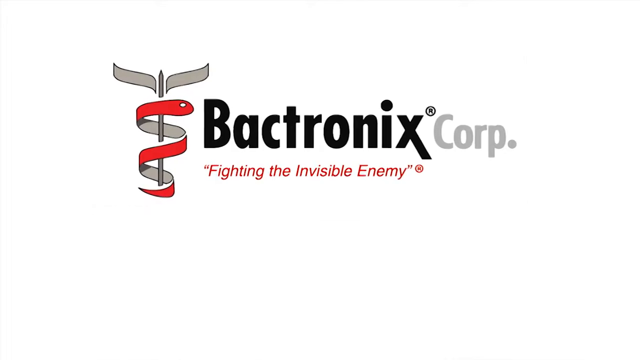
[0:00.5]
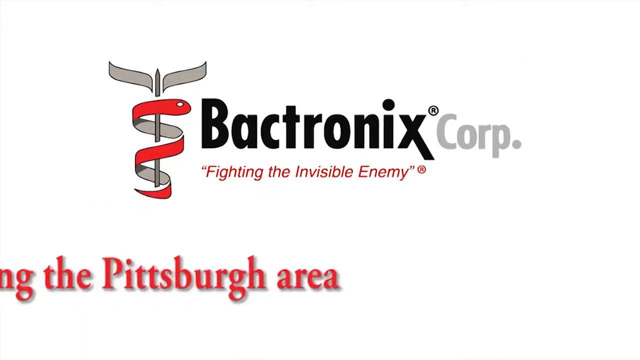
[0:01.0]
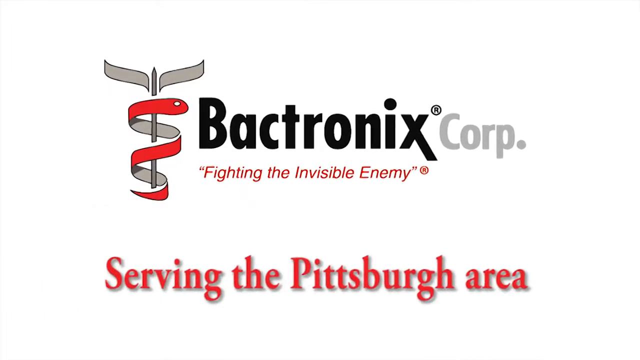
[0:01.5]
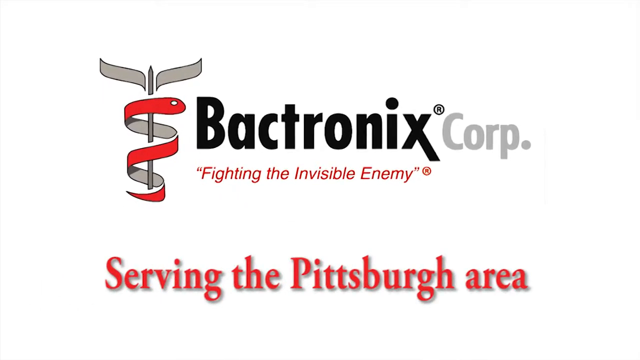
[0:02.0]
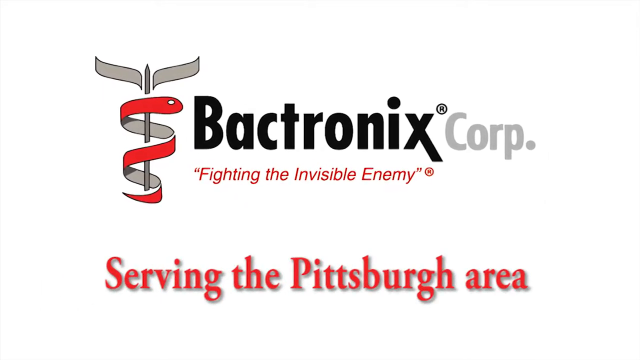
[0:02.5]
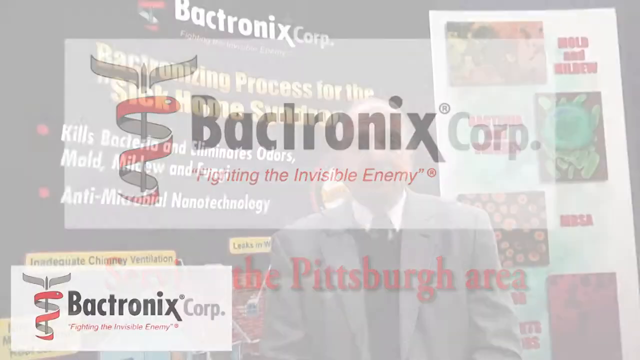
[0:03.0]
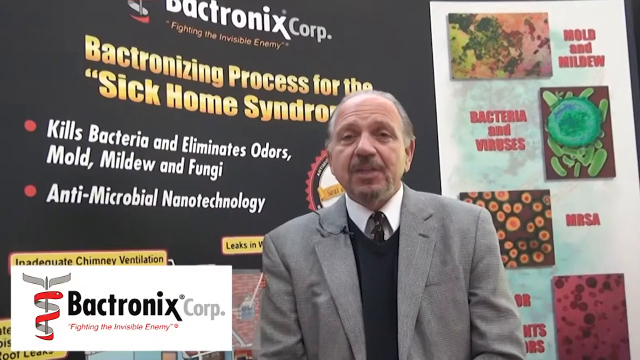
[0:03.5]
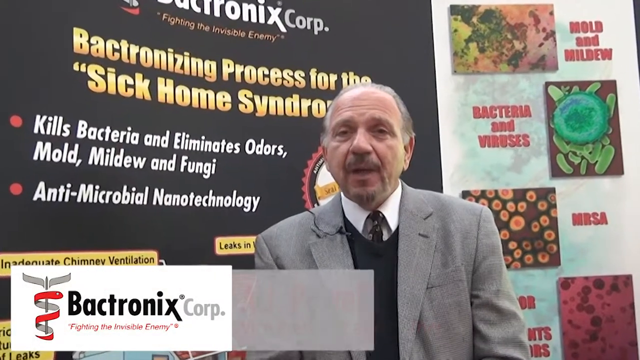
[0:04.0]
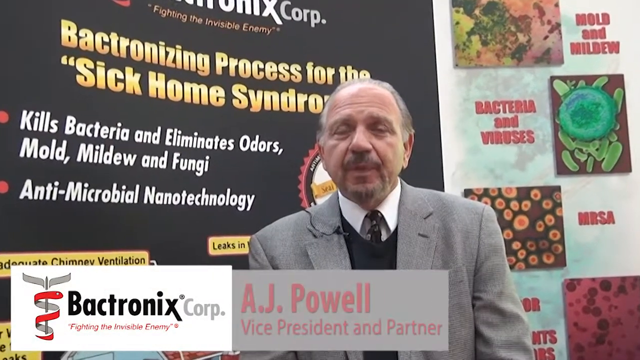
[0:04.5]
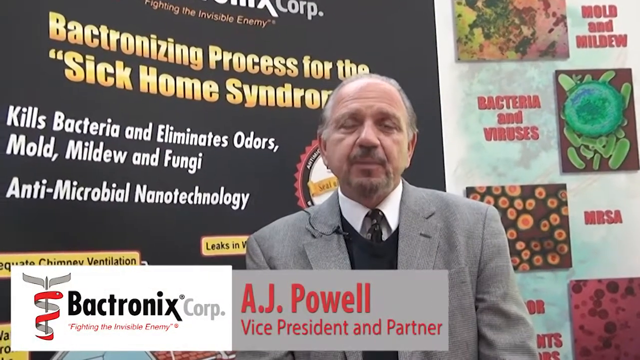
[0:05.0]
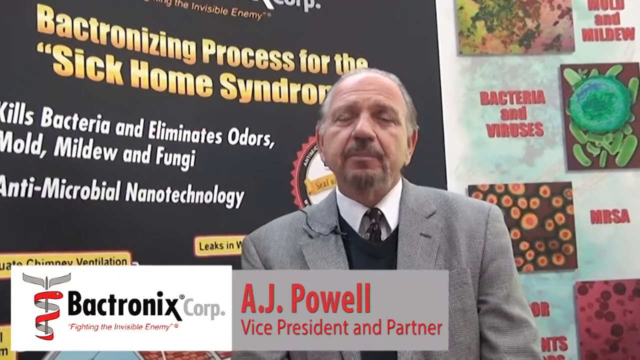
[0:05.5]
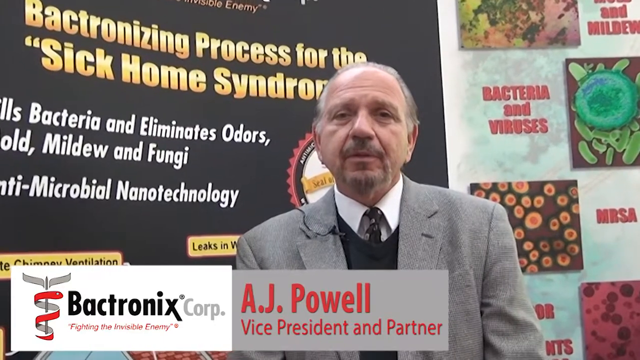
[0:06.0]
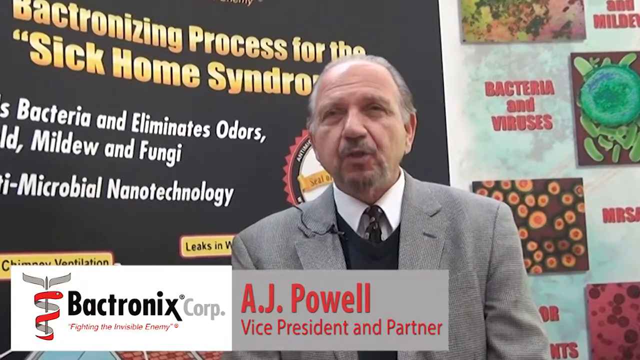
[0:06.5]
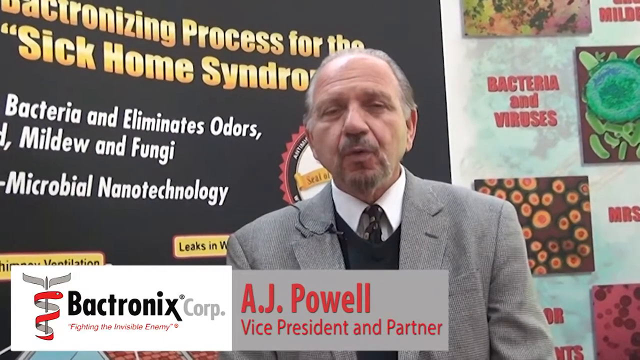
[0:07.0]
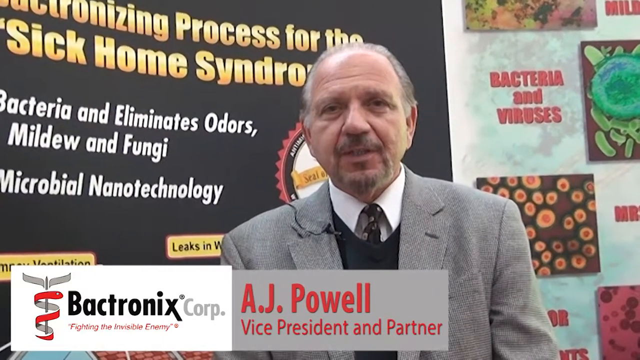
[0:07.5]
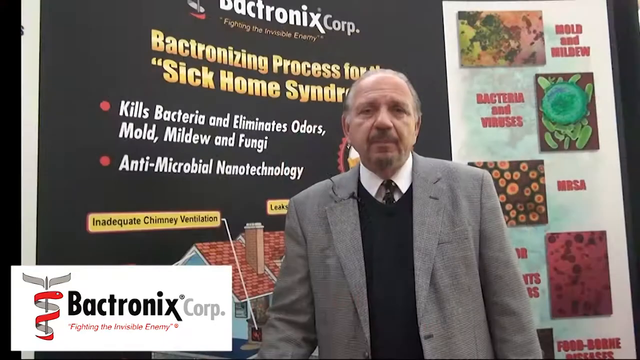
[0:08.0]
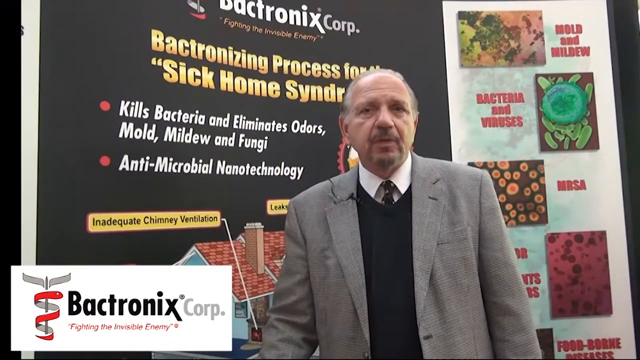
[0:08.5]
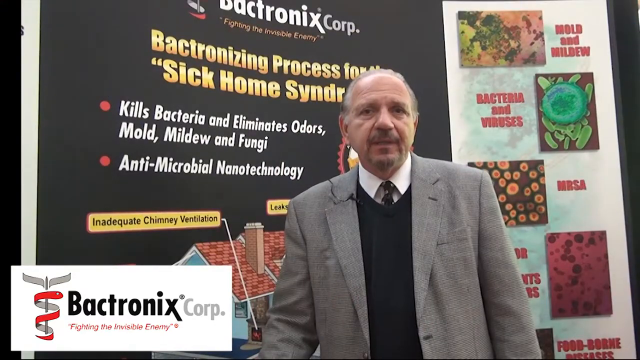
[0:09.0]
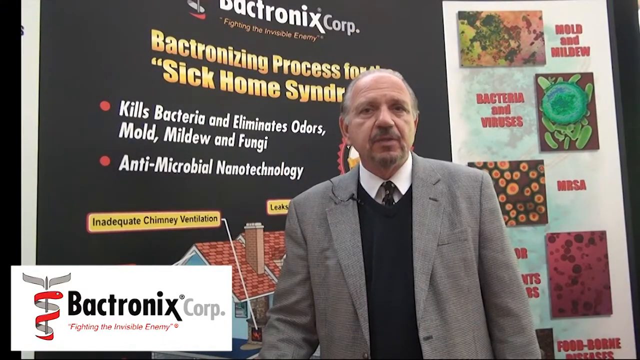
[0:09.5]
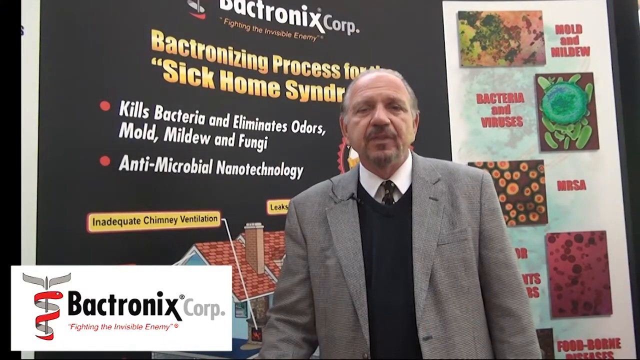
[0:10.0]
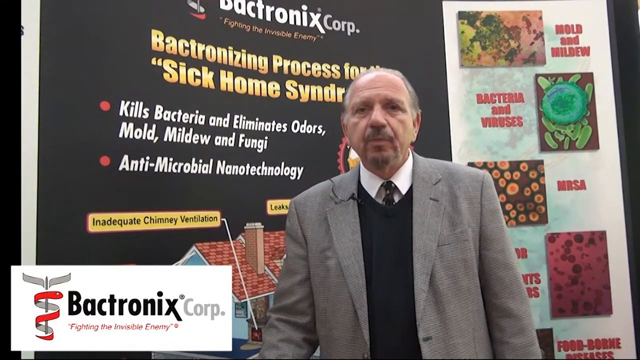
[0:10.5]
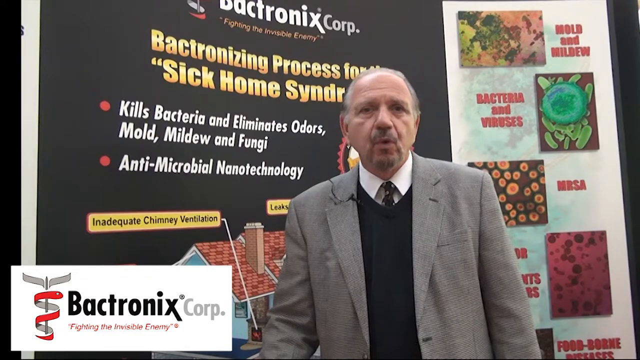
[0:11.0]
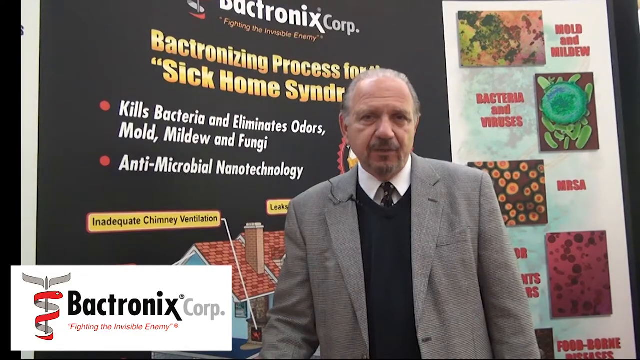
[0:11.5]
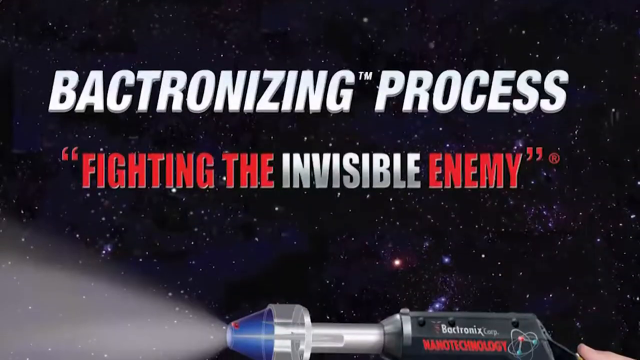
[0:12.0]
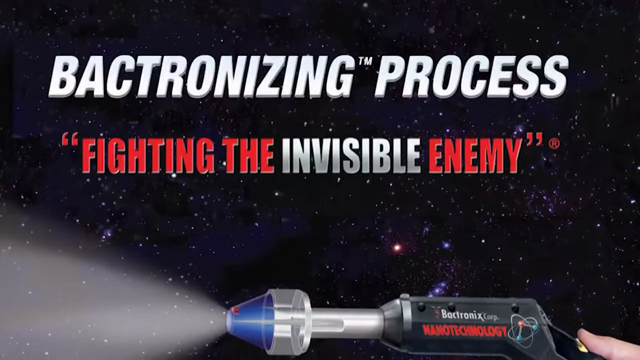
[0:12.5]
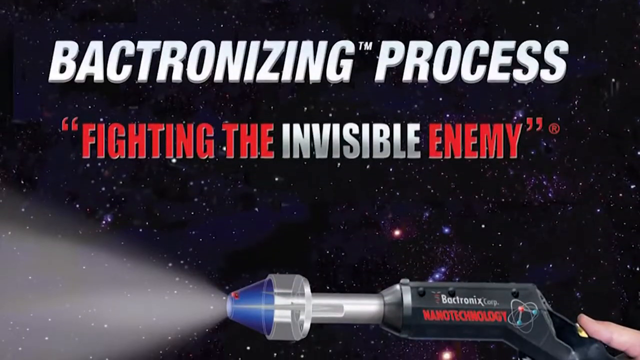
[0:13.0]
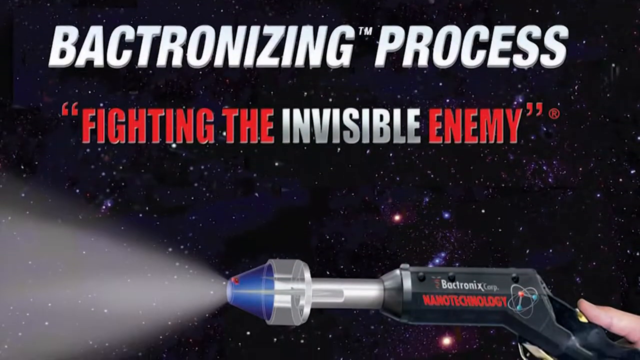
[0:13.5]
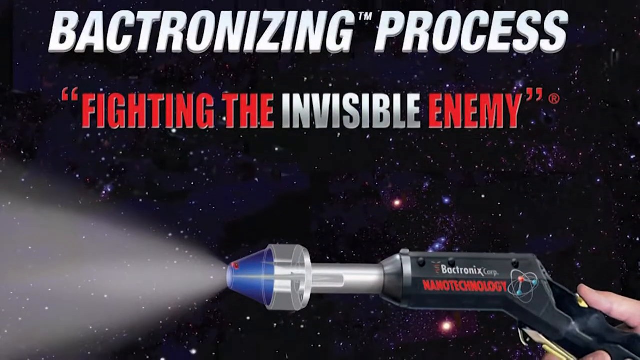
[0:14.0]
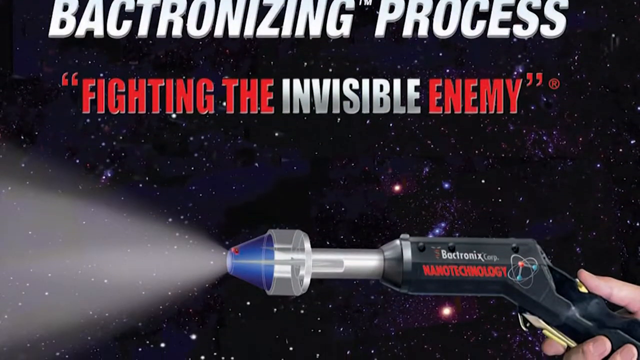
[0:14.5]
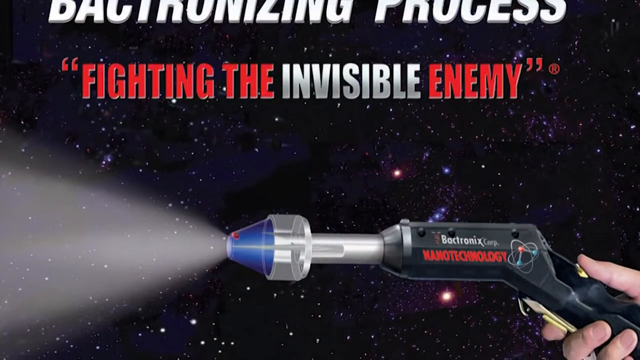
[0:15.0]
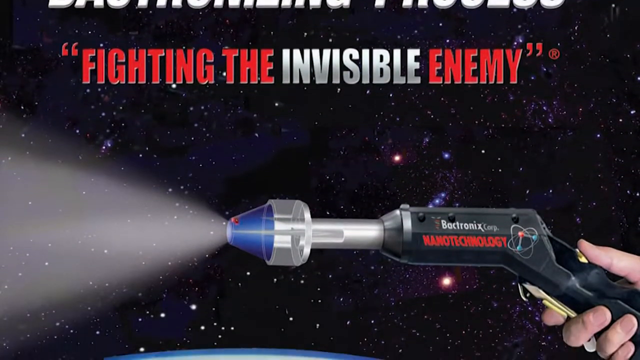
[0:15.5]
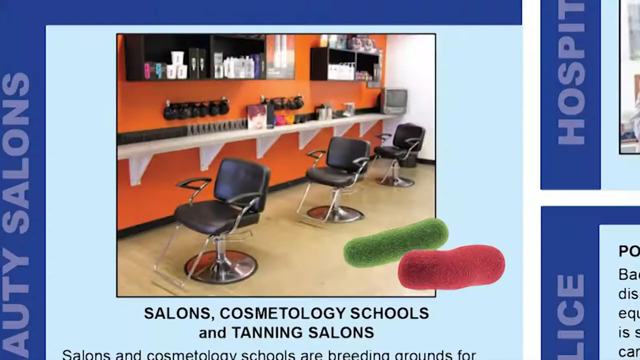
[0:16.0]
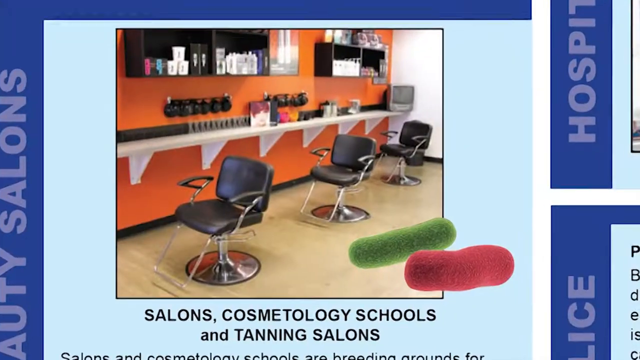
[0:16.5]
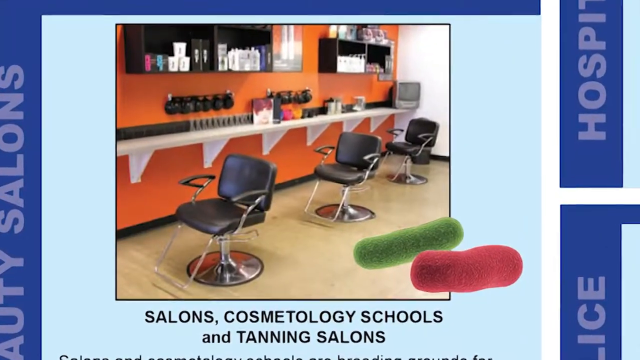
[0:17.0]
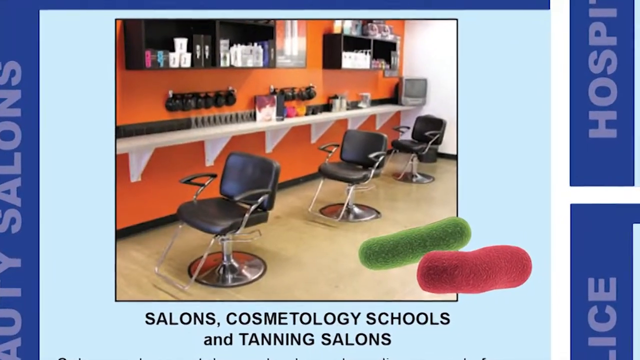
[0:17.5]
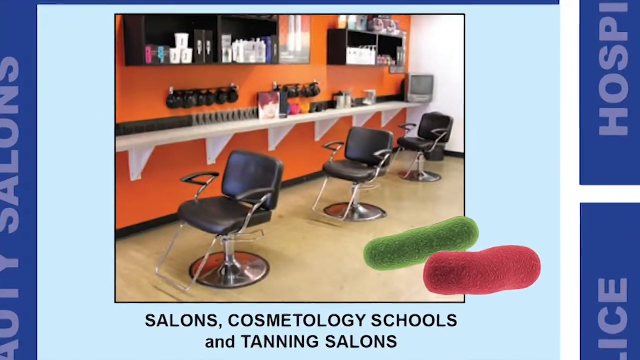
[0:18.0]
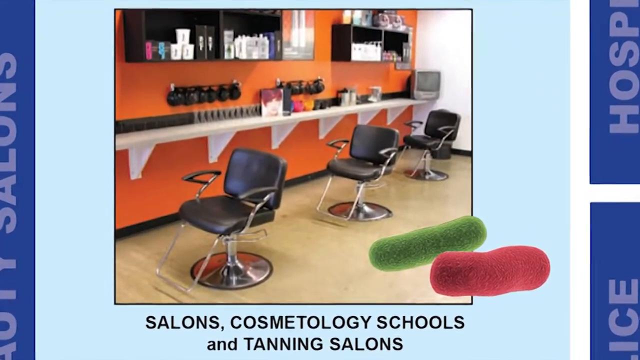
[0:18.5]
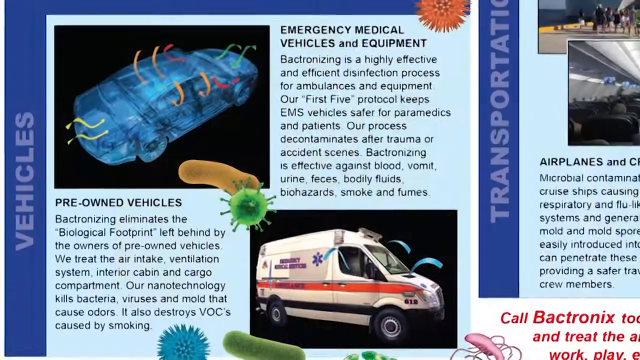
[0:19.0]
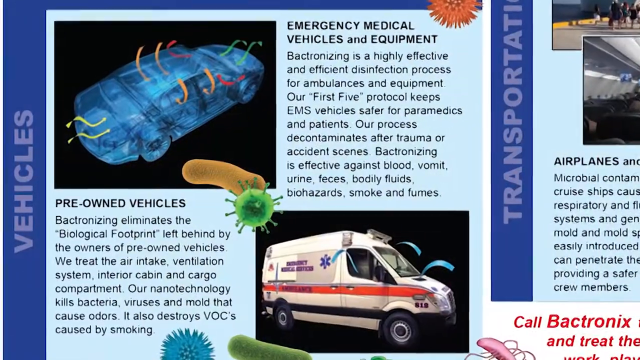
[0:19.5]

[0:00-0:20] The video opens with a title card reading "Bactronix Corp. Fighting the Invisible Enemy," with a grey and red Caduceus graphic next to it. The text "Serving the Pittsburgh area" slides in from the left. The scene changes to a man standing in front of a backdrop advertising the Bactronix Corporation. On the left of the backdrop are the phrases "Bactronizing Process for the Sick Home Syndrome," "Kills Bacteria and Eliminates Odors, Mold, Mildew, and Fungi," and "Antimicrobial Nanotechnology." On the right are what look like microscopic views of bacteria, viruses, and different infective agents, labeled Mold and Mildew, Bacteria and Viruses, and MRSA. A text bar across the bottom of the screen has the Bactronix logo on the left and the speaker's name, A.J. Powell, Vice President and Partner, on the right. The man, wearing a light grey jacket, a black sweater vest, and a white shirt and tie, speaks to the camera. After a few seconds the shot switches to a graphic of someone holding what looks like a water gun with white spray coming out of it, with "Bactronizing Process Fighting the Invisible Enemy" above it. Photographs of a beauty salon follow, then a page showing a pre-owned car and an ambulance.